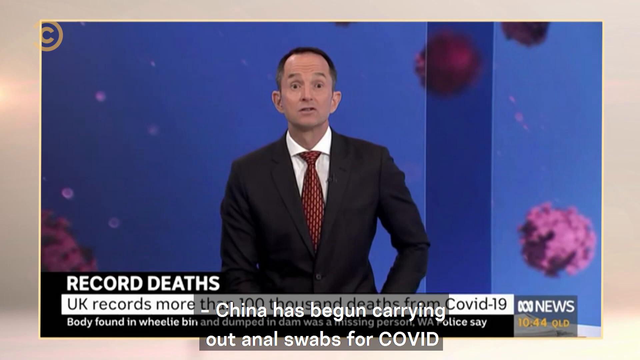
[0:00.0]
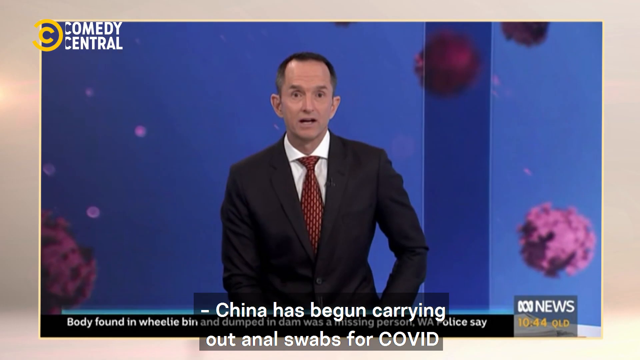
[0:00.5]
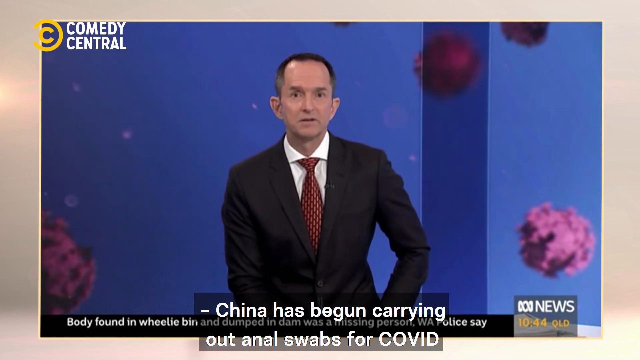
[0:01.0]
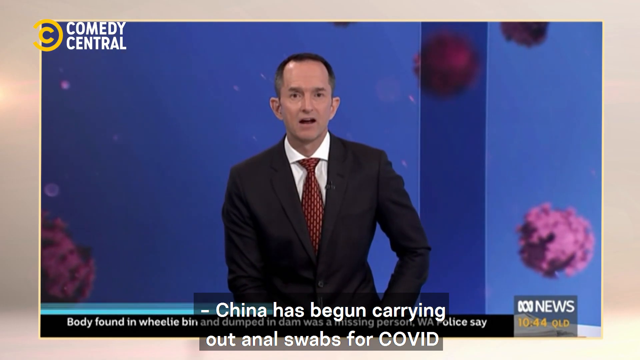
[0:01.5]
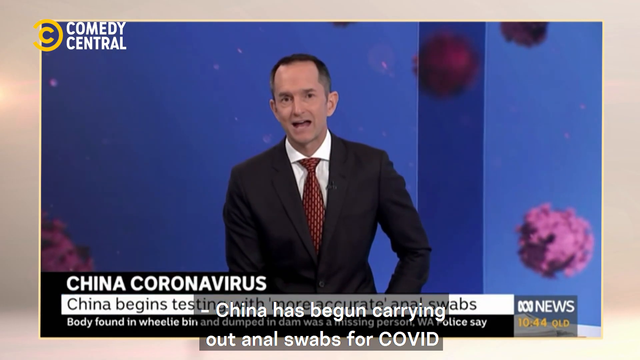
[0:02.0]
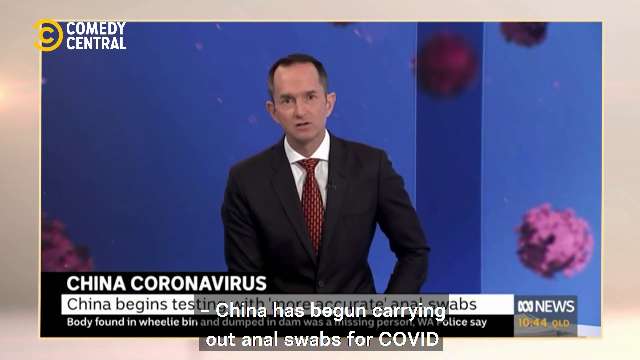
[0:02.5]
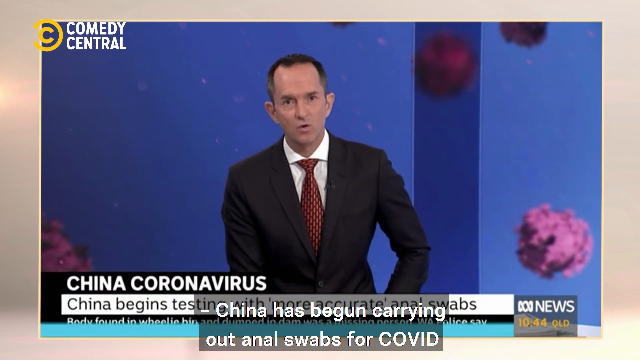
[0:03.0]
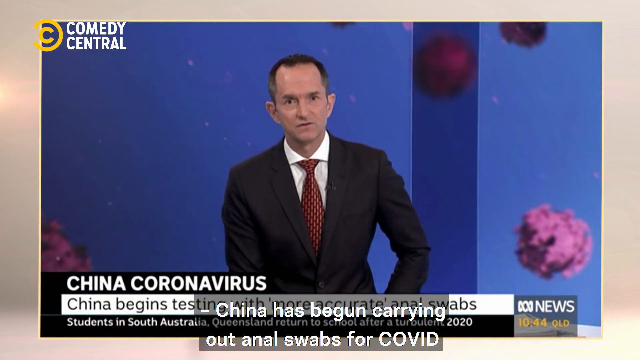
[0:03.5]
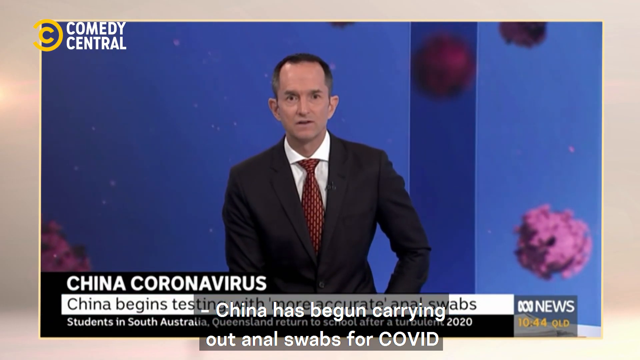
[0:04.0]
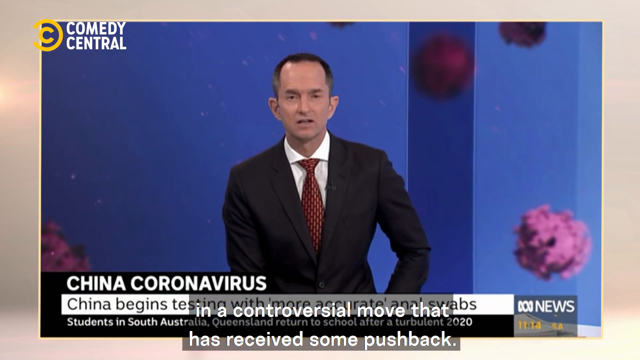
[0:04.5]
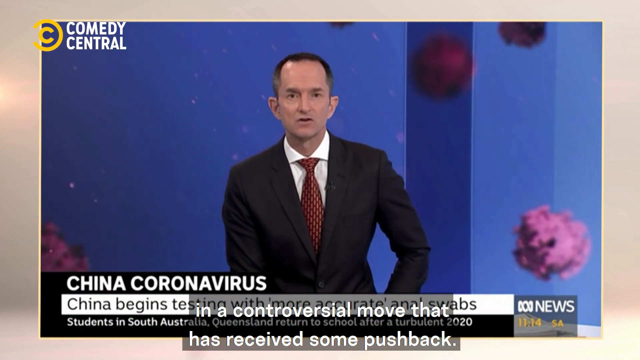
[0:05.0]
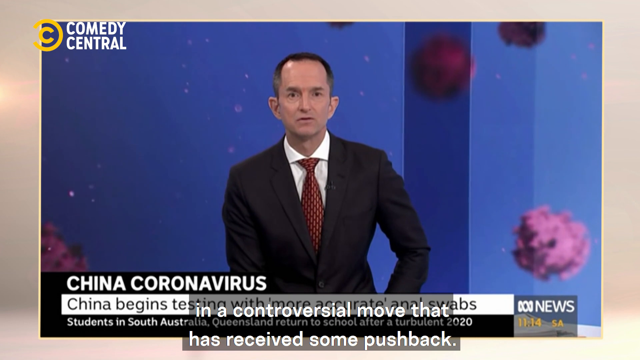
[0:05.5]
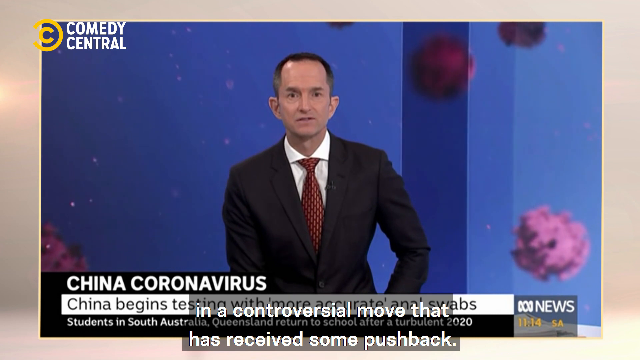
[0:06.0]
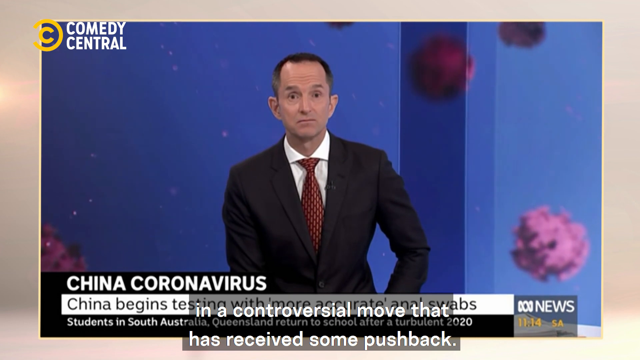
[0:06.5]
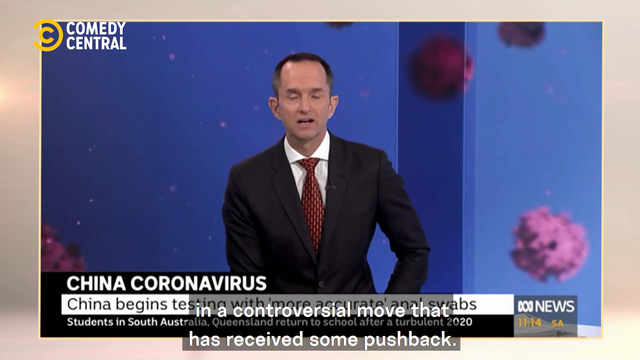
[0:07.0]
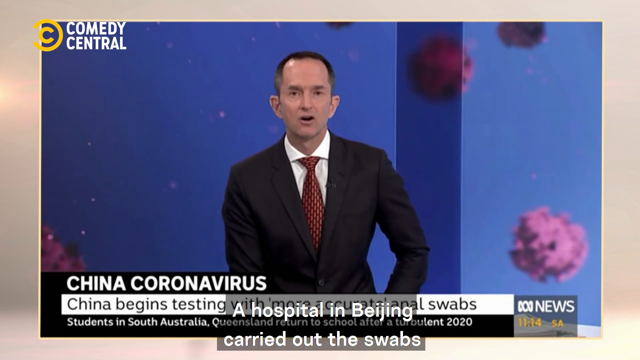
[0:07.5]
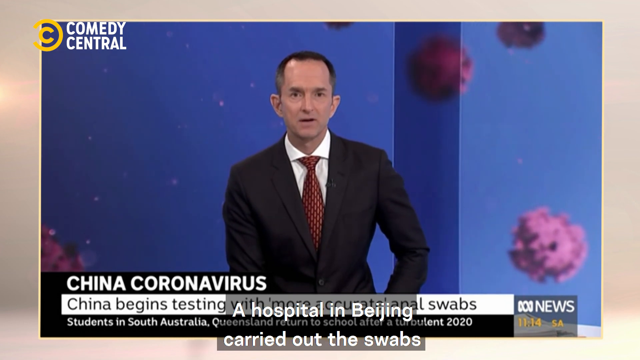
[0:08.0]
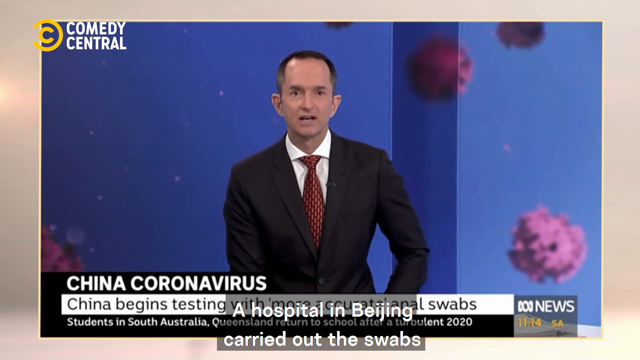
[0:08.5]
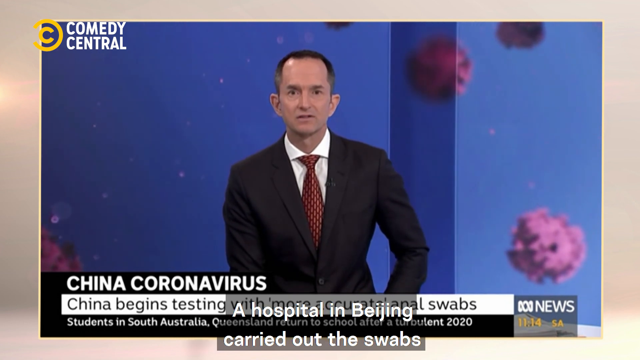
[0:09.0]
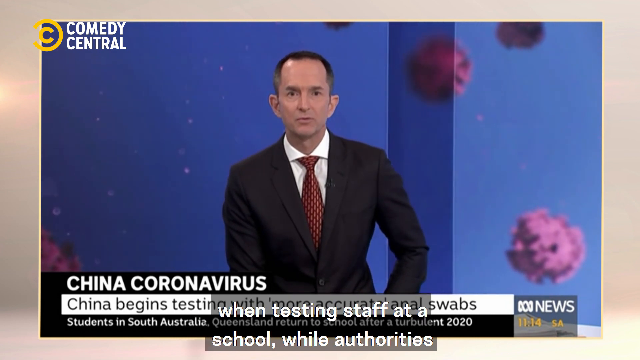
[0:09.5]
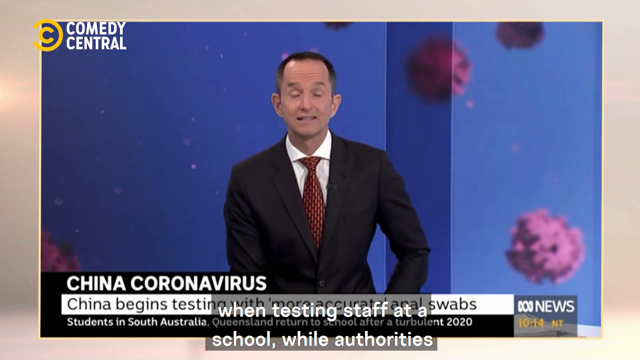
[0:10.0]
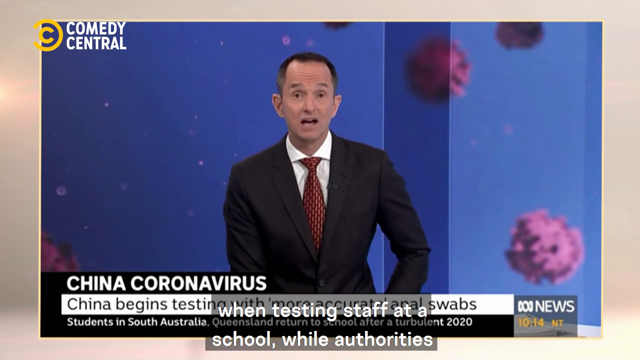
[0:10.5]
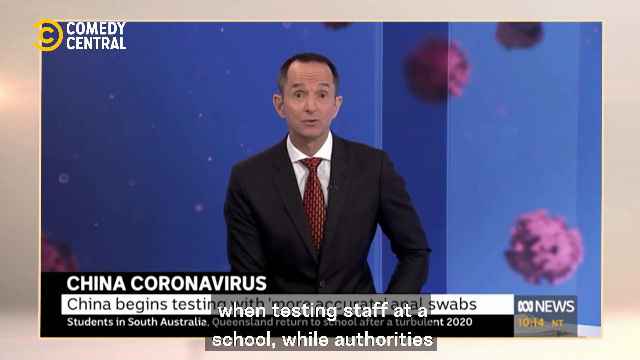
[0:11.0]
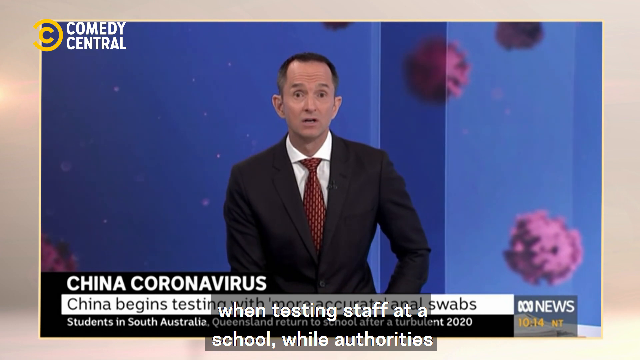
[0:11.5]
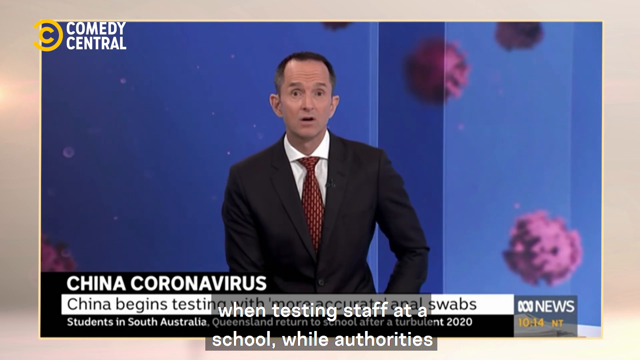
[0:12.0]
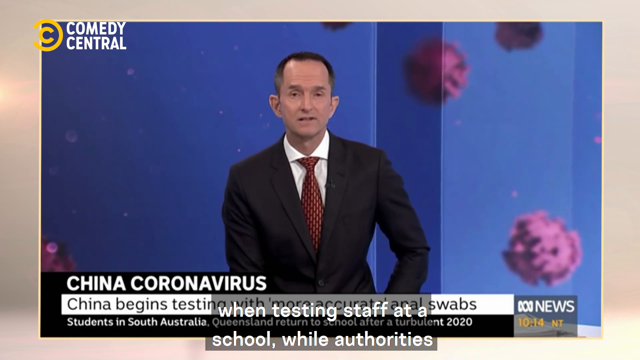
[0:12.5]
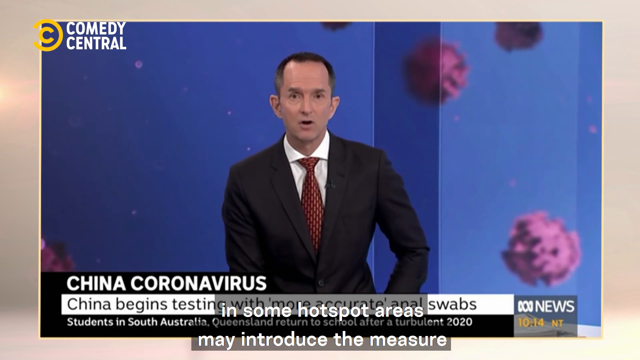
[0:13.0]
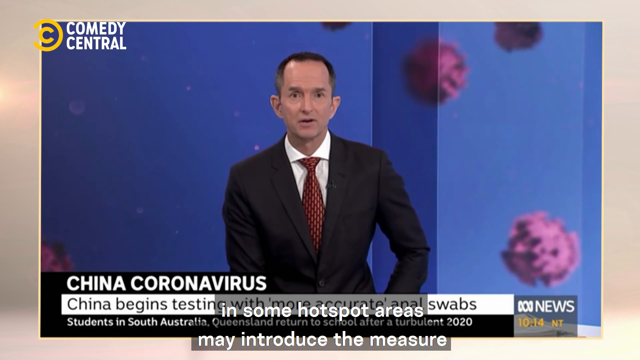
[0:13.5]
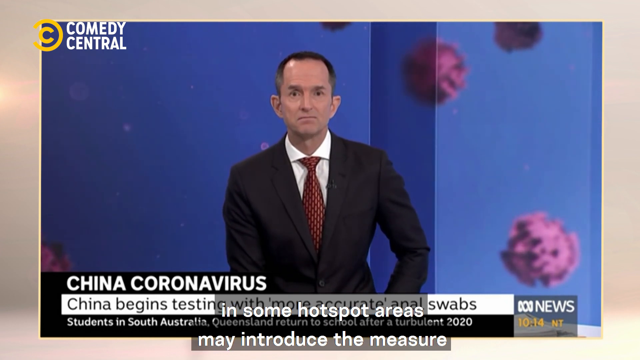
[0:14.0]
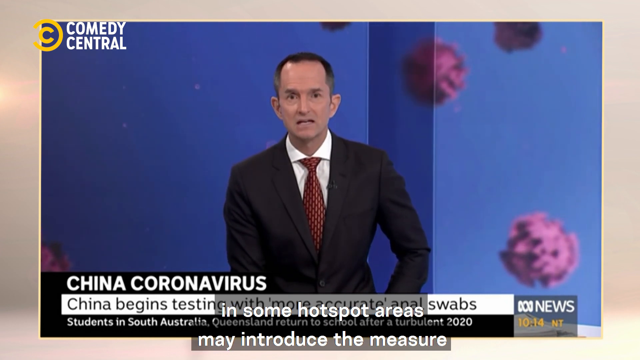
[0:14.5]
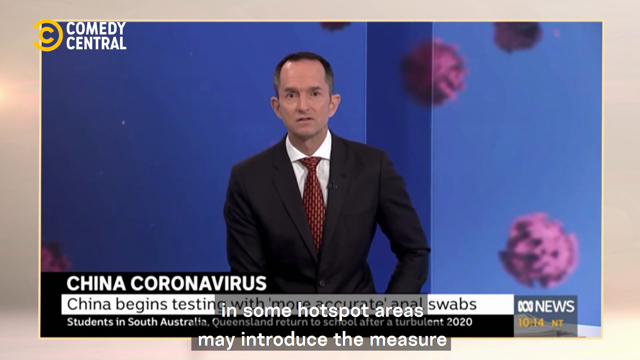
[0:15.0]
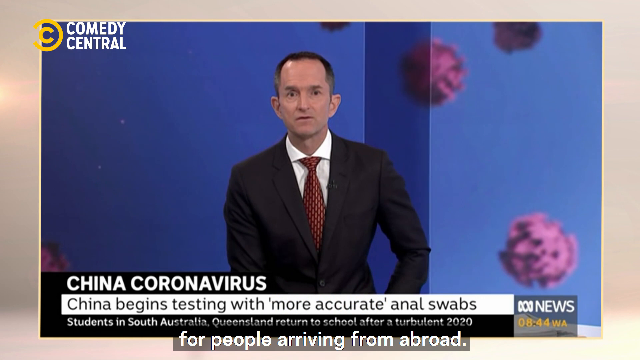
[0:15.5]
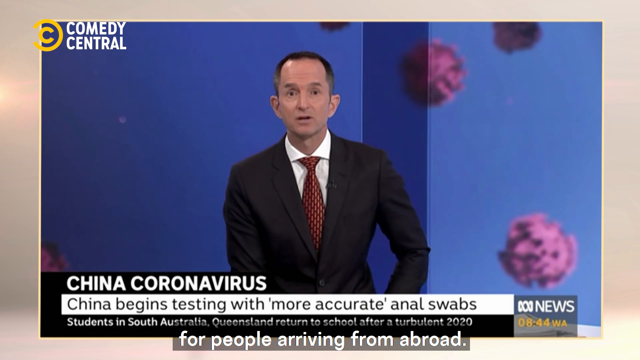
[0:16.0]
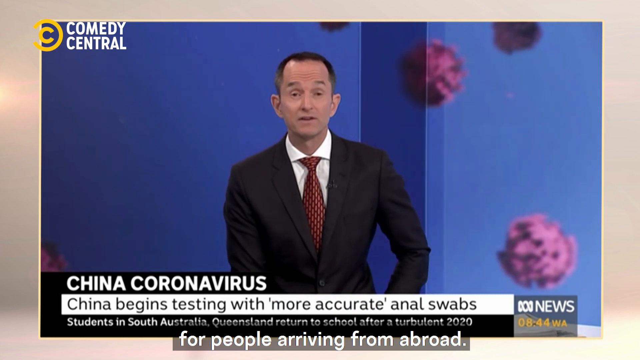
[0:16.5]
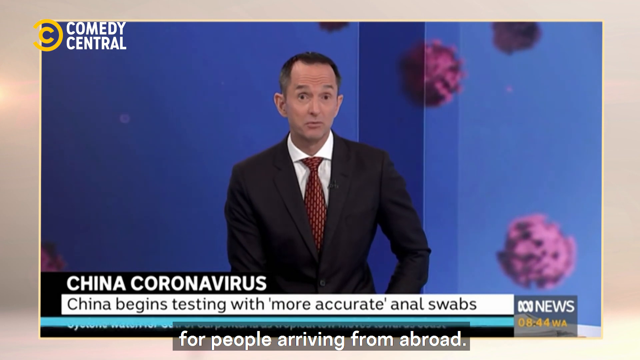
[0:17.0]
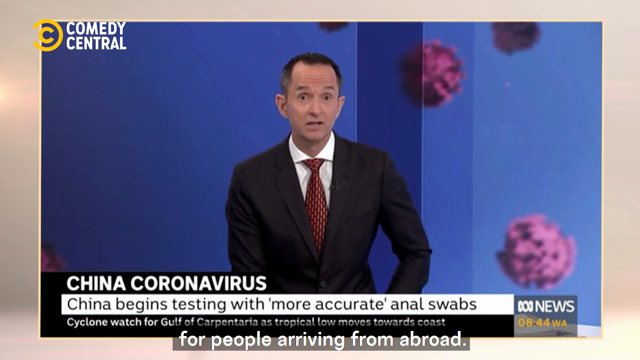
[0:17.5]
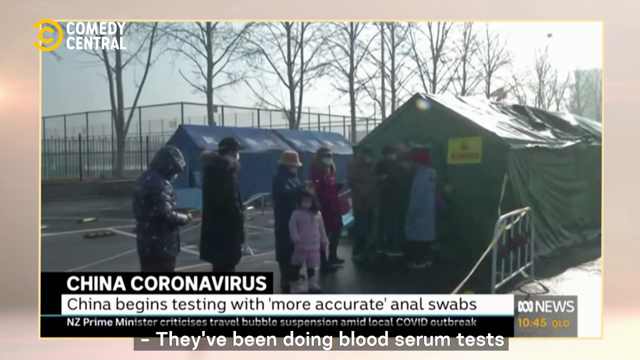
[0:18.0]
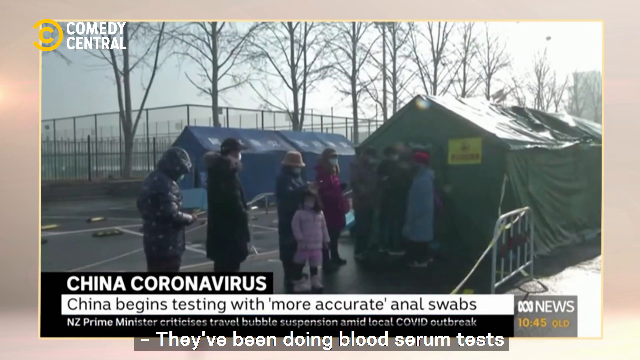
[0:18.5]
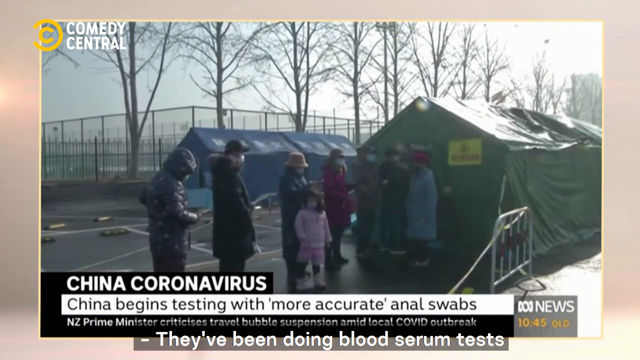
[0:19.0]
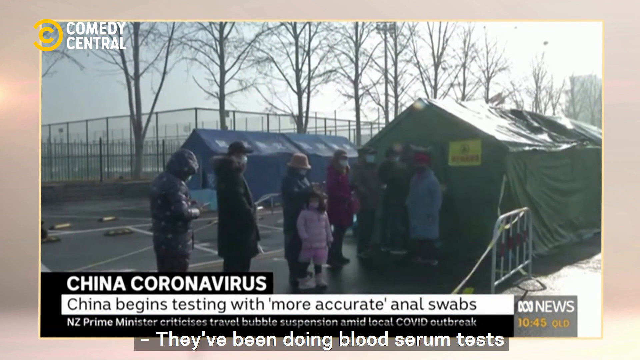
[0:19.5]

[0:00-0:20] Against a blue background, little puffy balls fall from the sky, and a news anchor is in the center, wearing a suit and tie and probably in his 40s. Text at the bottom of the screen refers to record deaths: "UK records more than 100,000 deaths from Covid-19." The text then changes to read "China coronavirus China begins testing with more accurate swabs." On top of the news screen's text, the video has its own captions: "China has been carrying out anal swabs for COVID in a controversial move that it received some pushback. A hospital in Beijing has carried out swabs when testing staff at a school, while authorities in some hotspot areas may introduce the measure for people arriving from abroad." The scene then changes to fully covered tents with people in a line outside them. One tent has a green covering, and that is the one with all the people, about 15 of them waiting in line outside it.